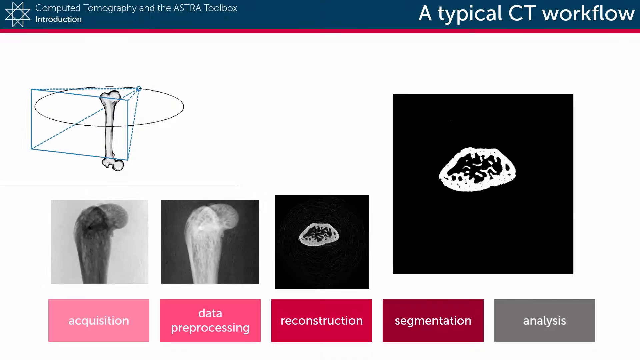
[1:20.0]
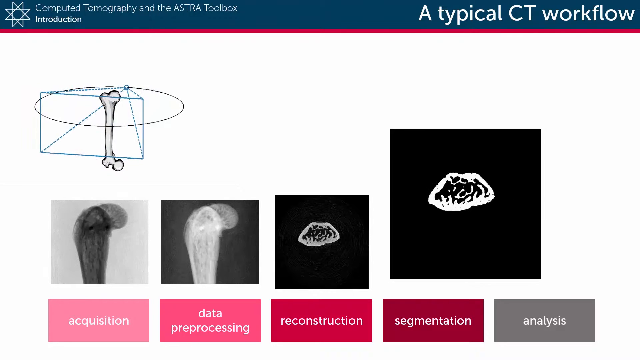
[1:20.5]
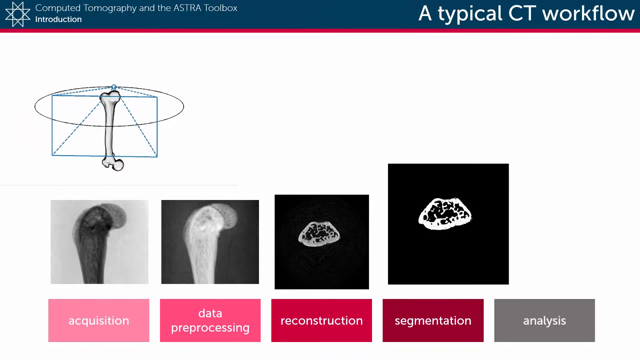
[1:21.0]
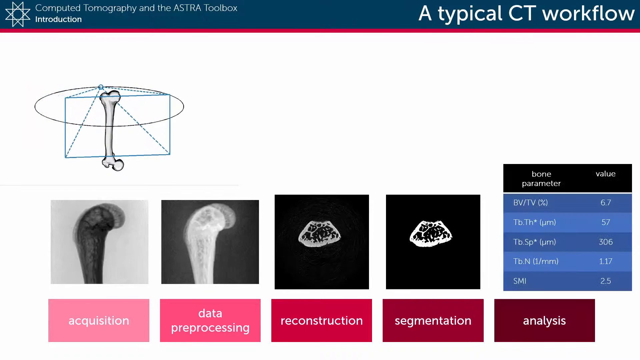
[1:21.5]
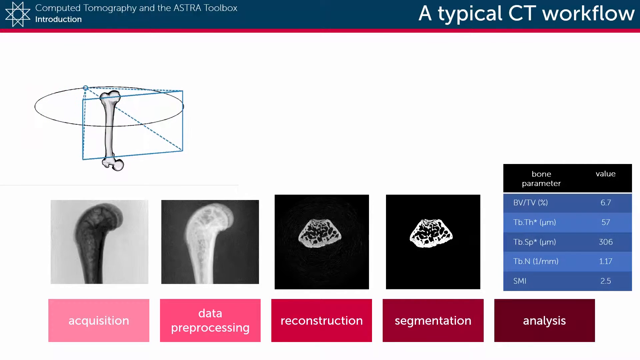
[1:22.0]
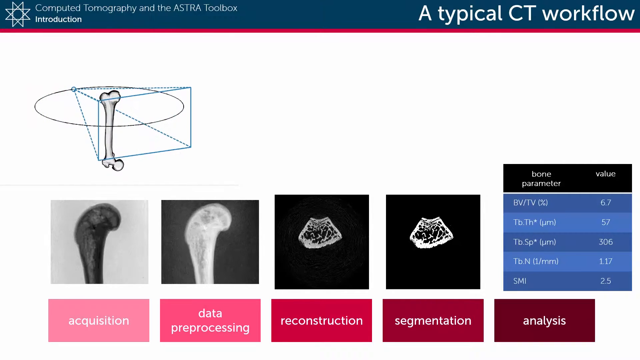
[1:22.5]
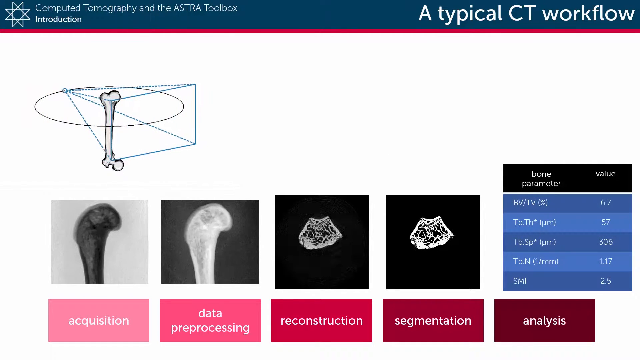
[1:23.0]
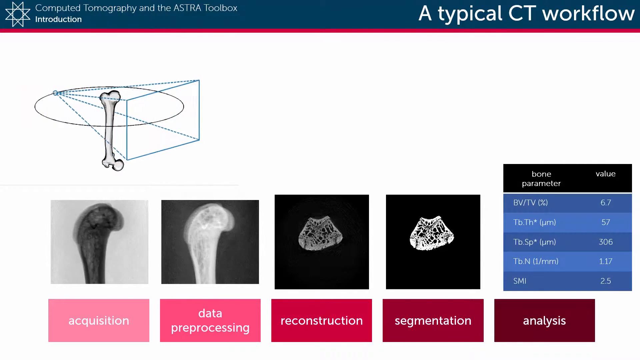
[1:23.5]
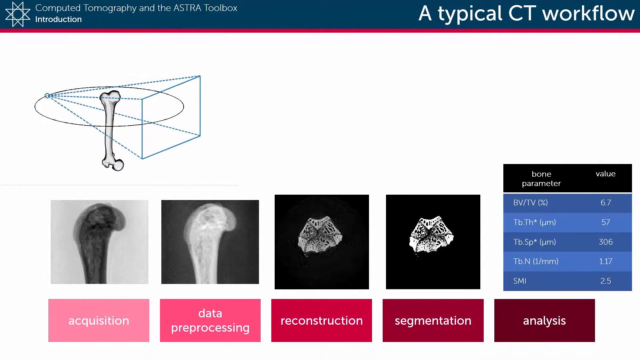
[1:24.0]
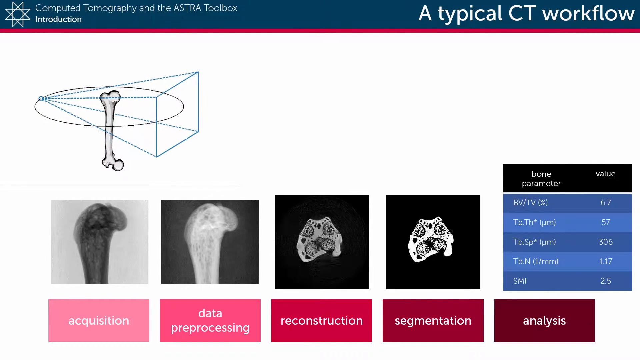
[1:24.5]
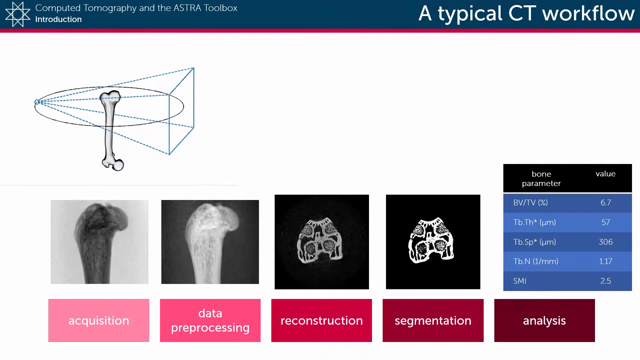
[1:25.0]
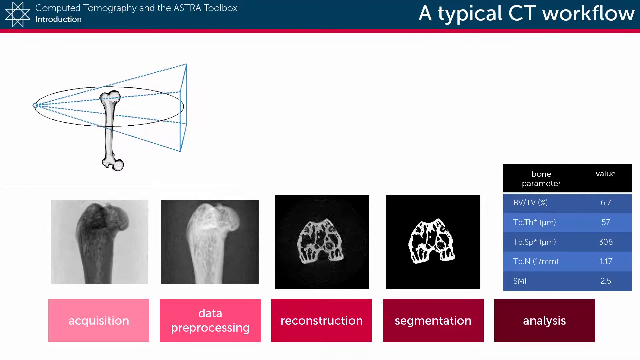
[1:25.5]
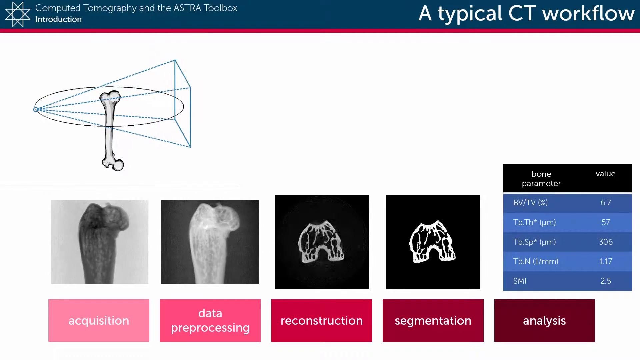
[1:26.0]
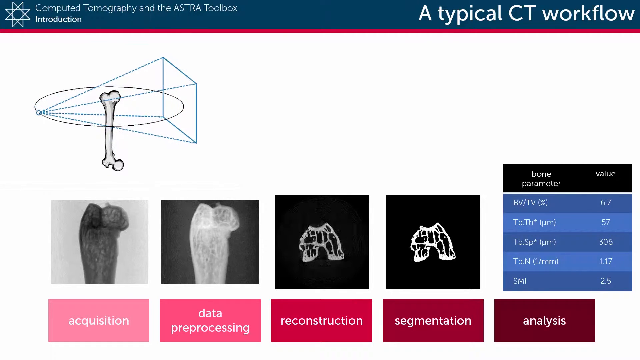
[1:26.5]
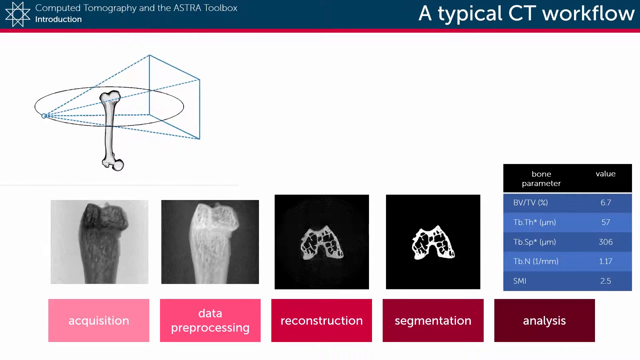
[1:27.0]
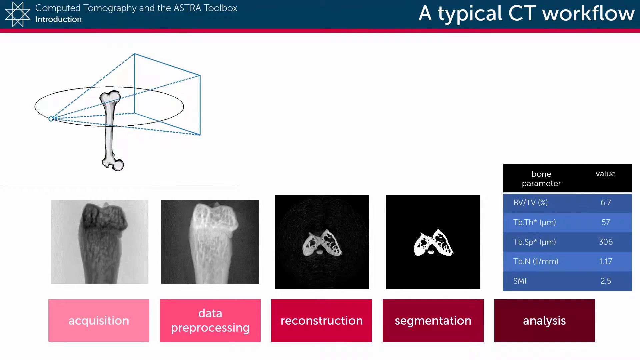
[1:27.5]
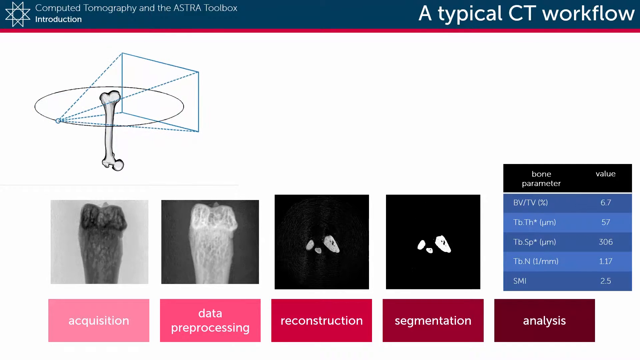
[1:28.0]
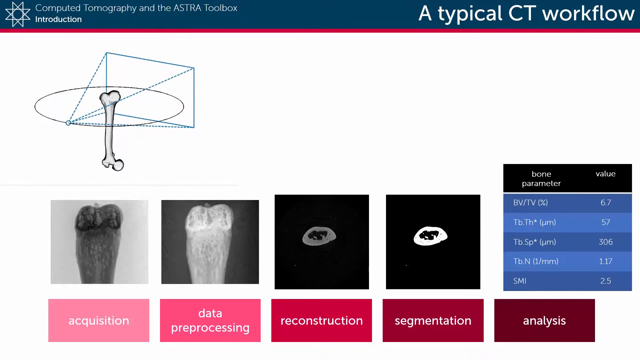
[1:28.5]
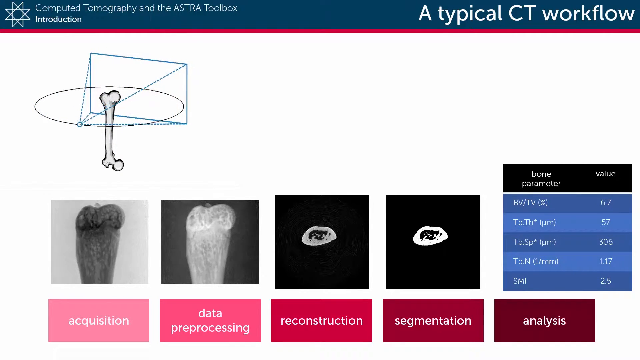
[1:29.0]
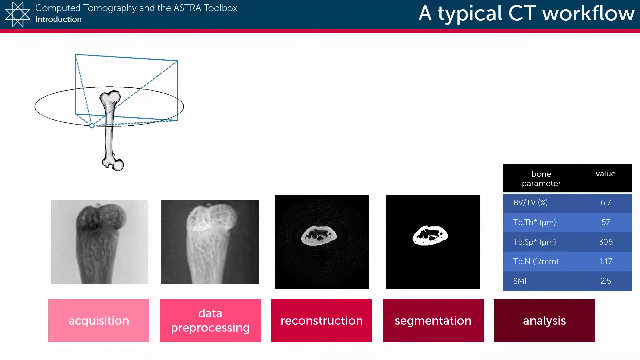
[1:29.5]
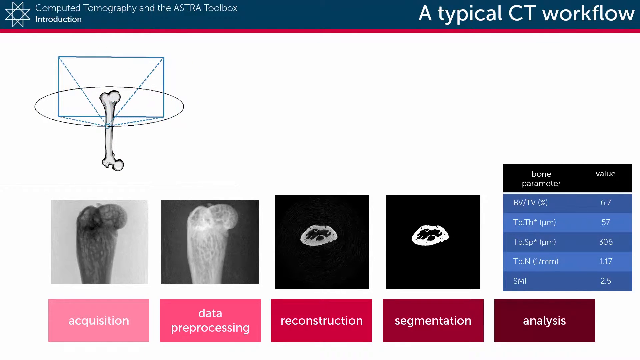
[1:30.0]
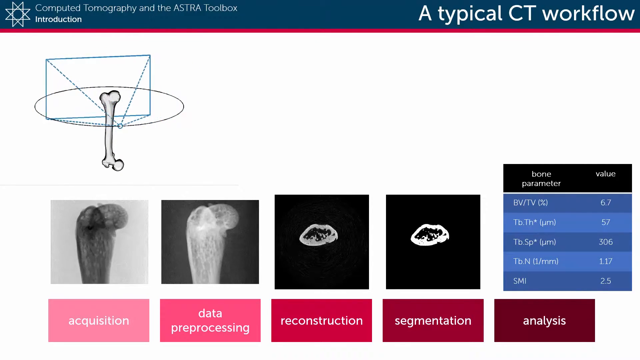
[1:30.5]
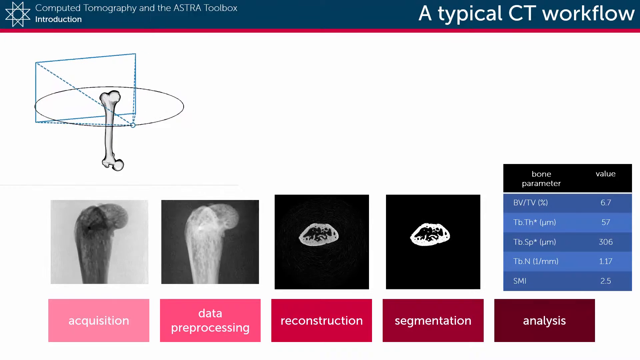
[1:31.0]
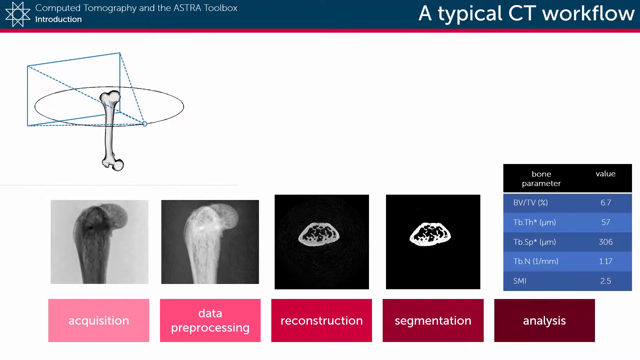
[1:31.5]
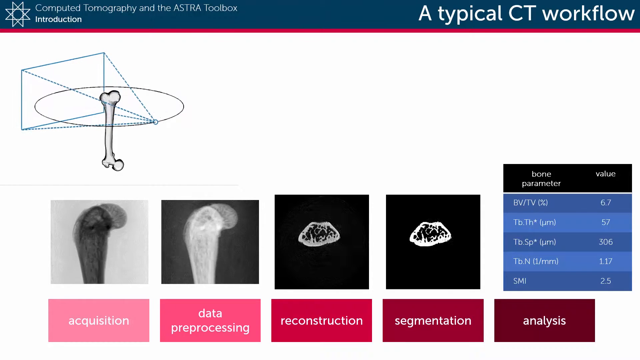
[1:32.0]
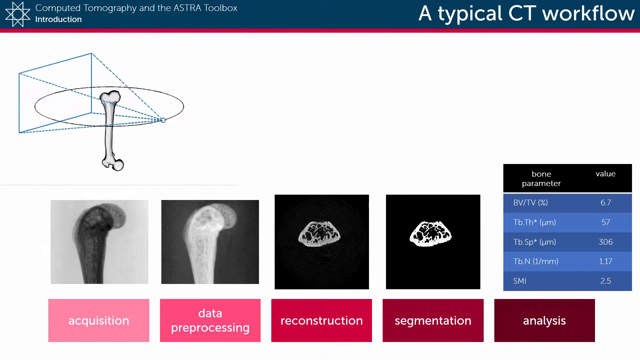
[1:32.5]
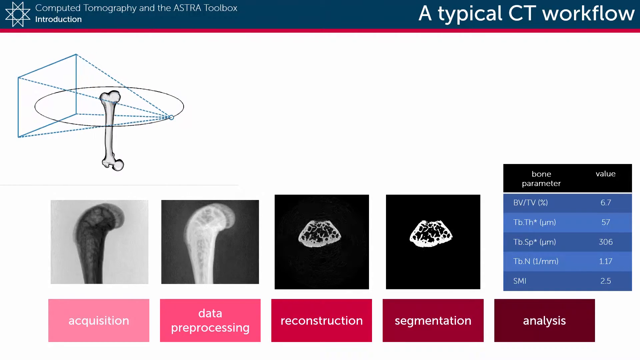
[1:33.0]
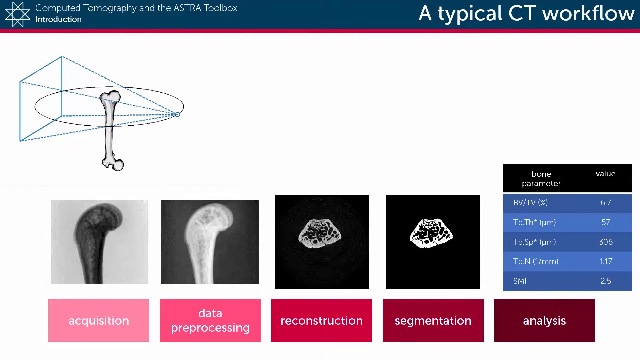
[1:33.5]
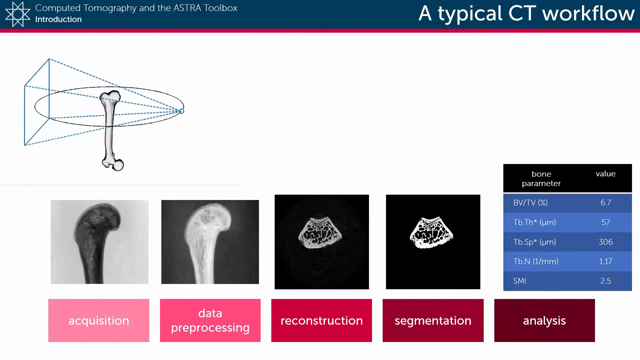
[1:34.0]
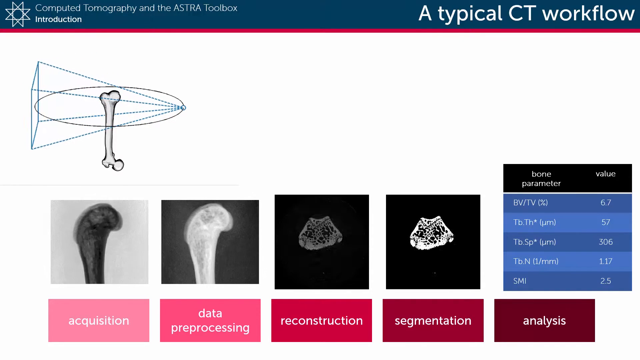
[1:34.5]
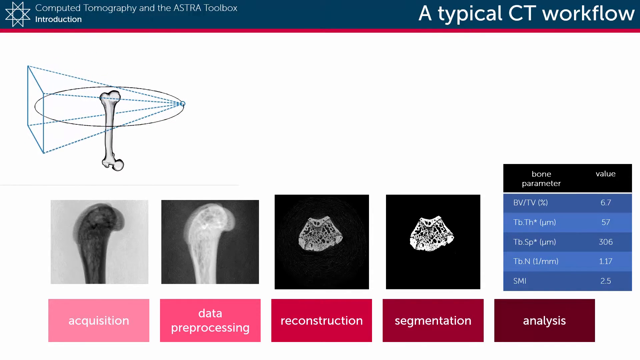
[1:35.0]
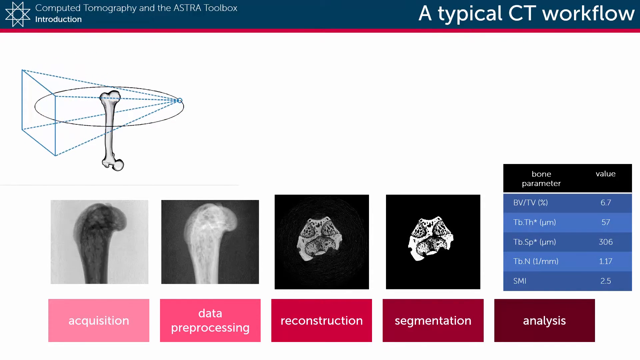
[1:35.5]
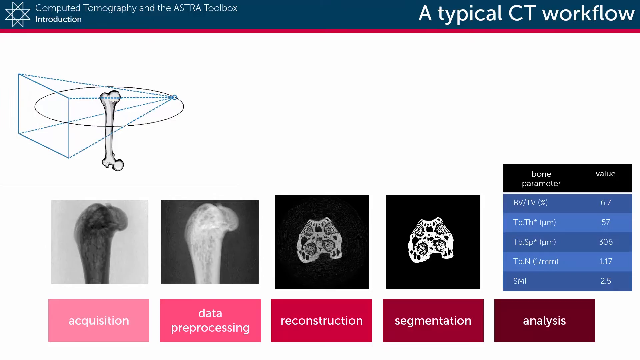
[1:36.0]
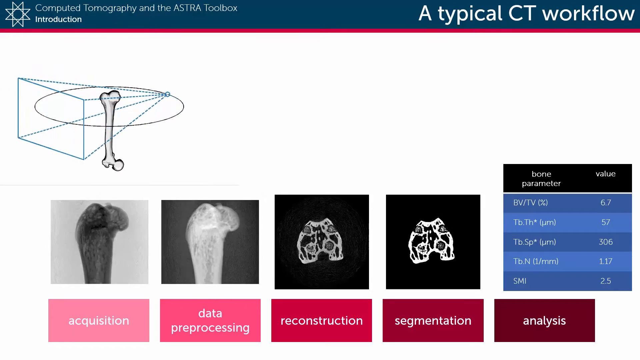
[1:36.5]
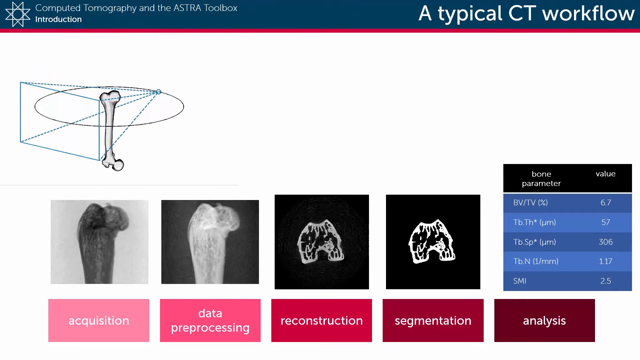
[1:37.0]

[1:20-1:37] The drawing in the top left is still rotating around the outer circle. In the bottom left corner two bones sit beside each other with kind of an X-ray look, rotating counterclockwise. The third image over and the big one on the right side are exactly the same: each starts as a kind of smaller globule and gets bigger. The one on the right then moves down beside the other three, so all of them are lined up above the gray buttons, which have turned red. On the right side, above the button that has now turned red, titled "Analysis," there is a black border that says "bone parameter" on the left side and "value" on the right side. Below it are five sections colored dark blue, light blue, dark blue, light blue, dark blue. Under "bone parameter" there are initials, and under "value" there are numbers. The drawing in the top left continues to rotate, the bones continue to rotate, and the other two images continue to expand out and then dissipate into nothing.